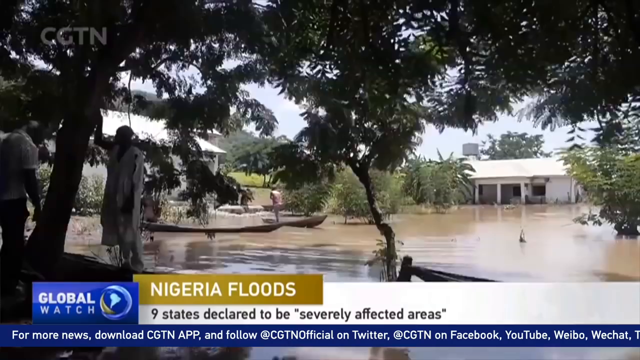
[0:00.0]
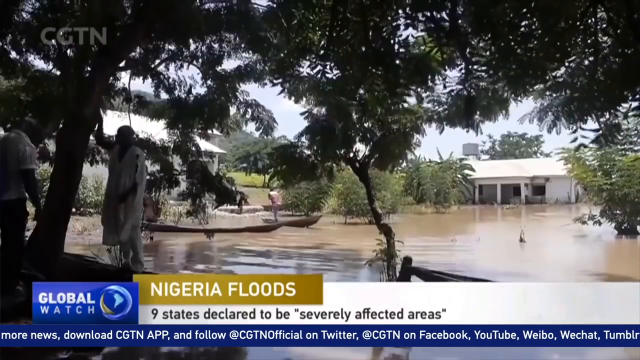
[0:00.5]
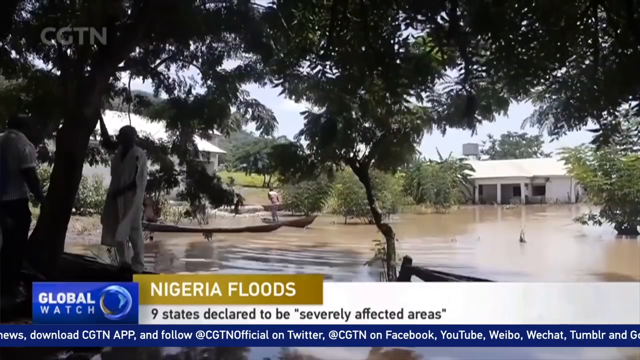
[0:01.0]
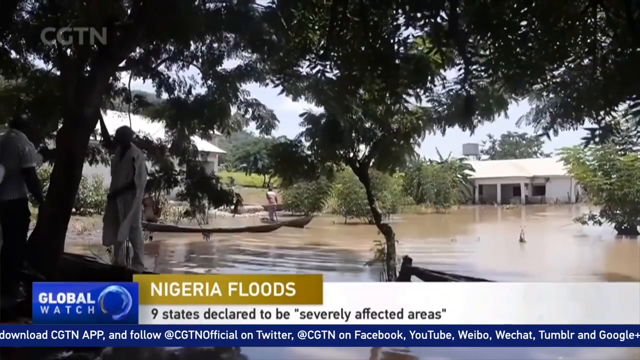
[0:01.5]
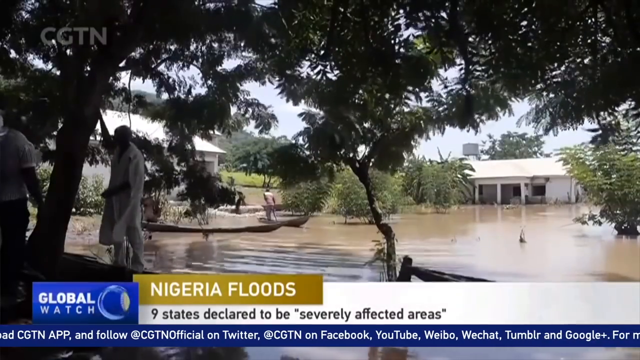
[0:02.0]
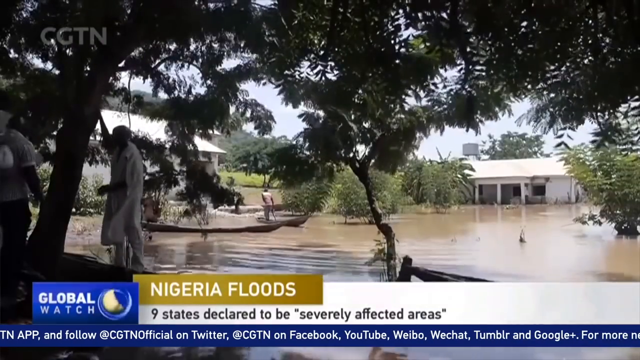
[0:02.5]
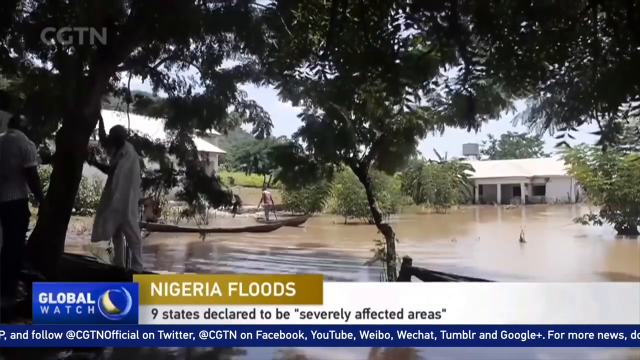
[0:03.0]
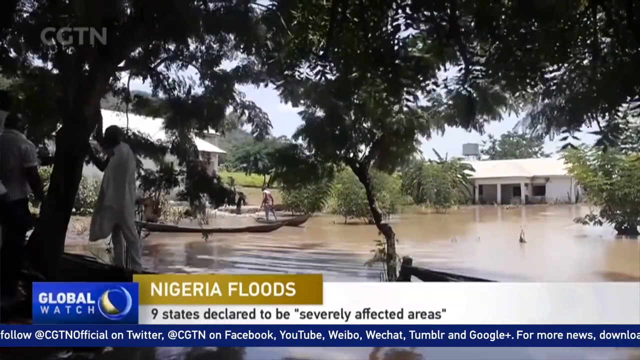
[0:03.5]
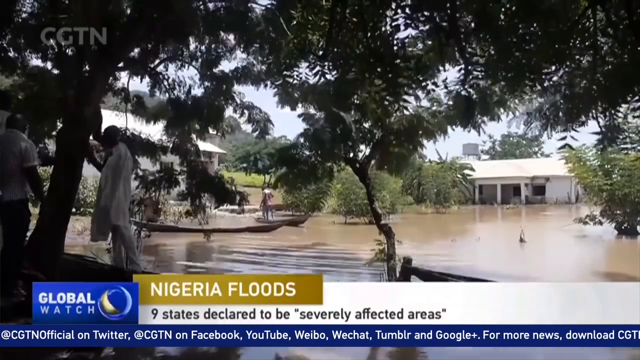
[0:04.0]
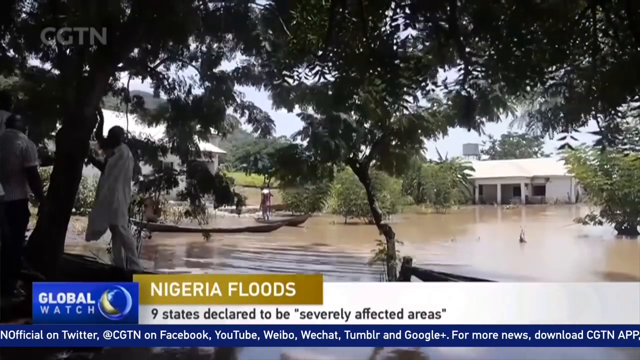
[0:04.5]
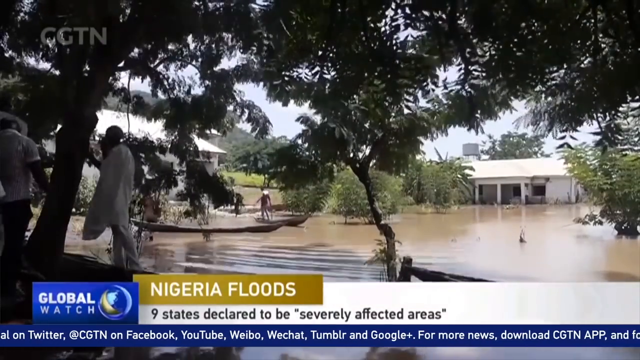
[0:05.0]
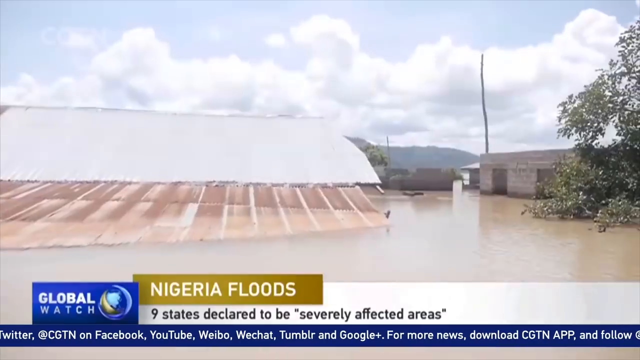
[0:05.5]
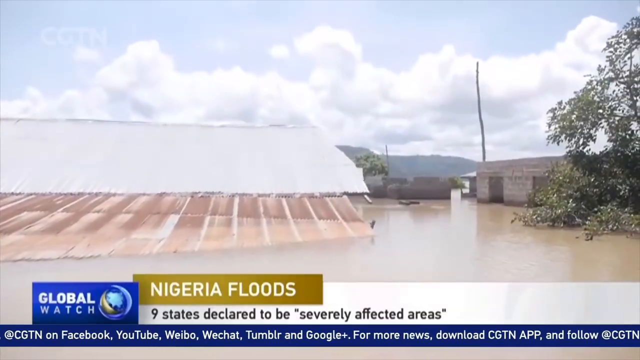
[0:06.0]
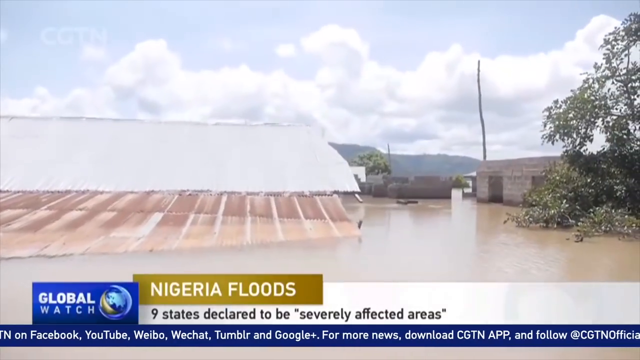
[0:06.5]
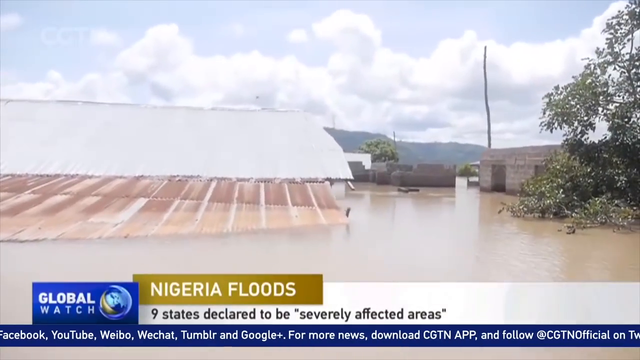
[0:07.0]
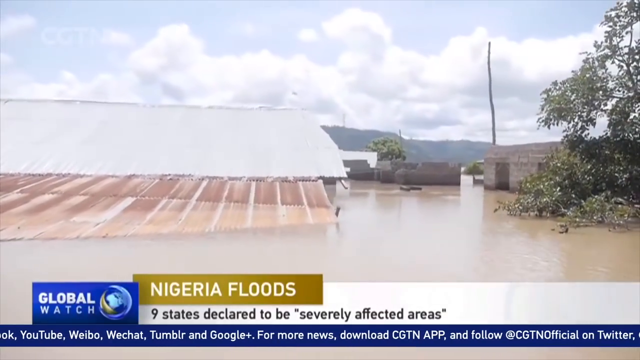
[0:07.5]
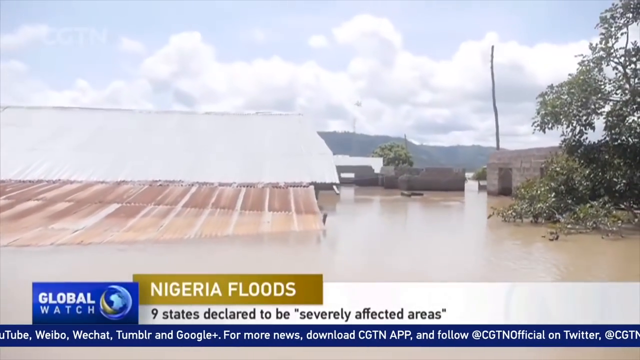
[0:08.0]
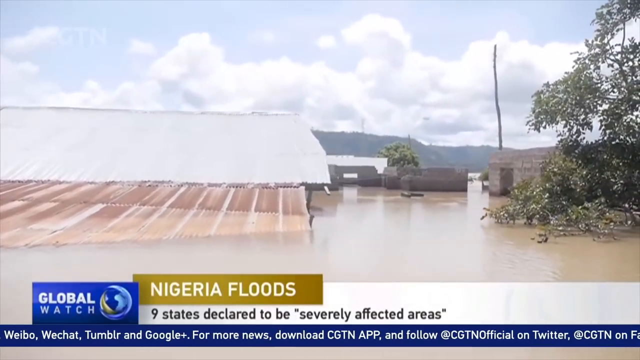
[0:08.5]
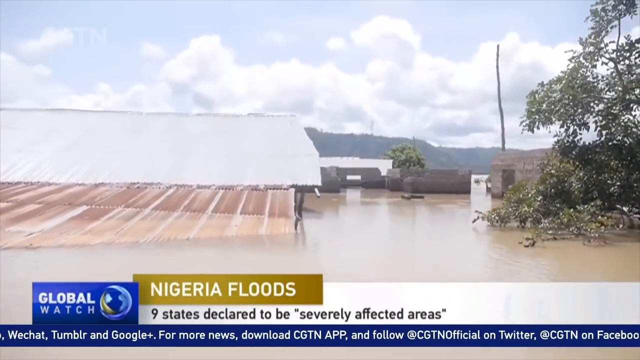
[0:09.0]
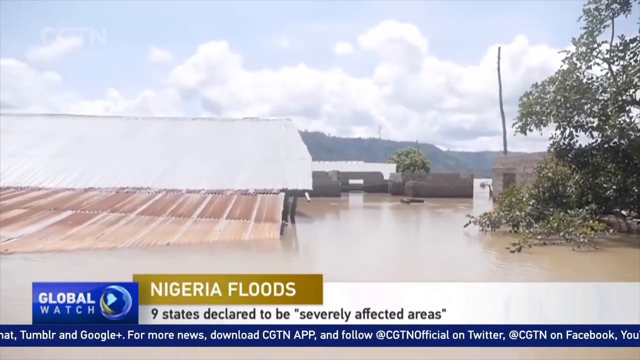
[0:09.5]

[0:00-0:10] The footage concerns floods in Nigeria, with states declared severely affected. There is water all over the place. Two men are under a tree, and in the distance a white building seems to be submerged in the water, as though it had been built right inside a river. A man in a canoe moves around on the water.